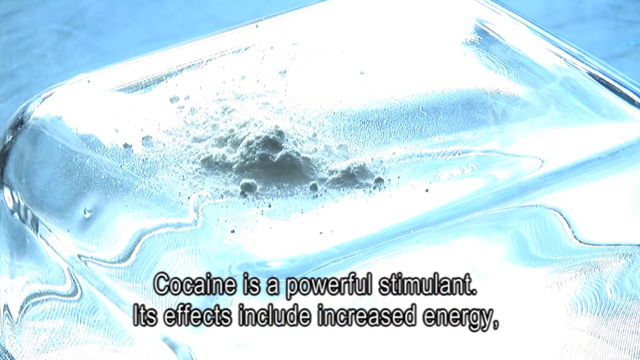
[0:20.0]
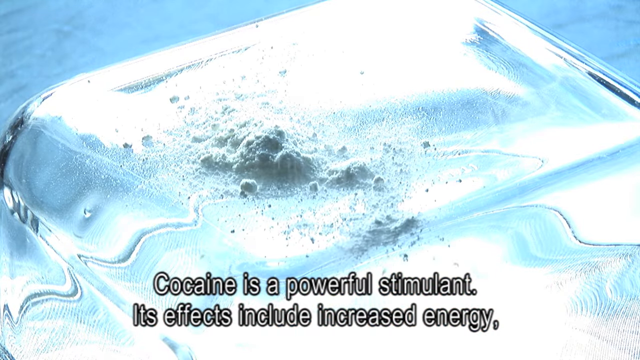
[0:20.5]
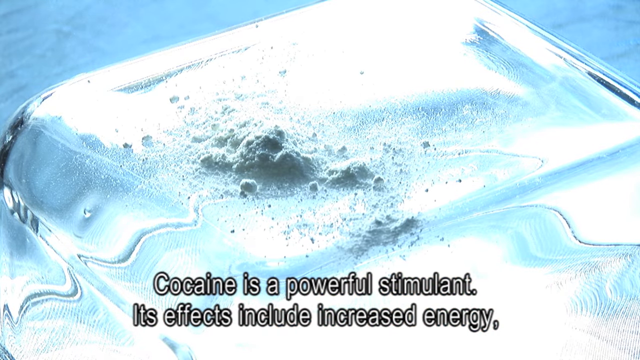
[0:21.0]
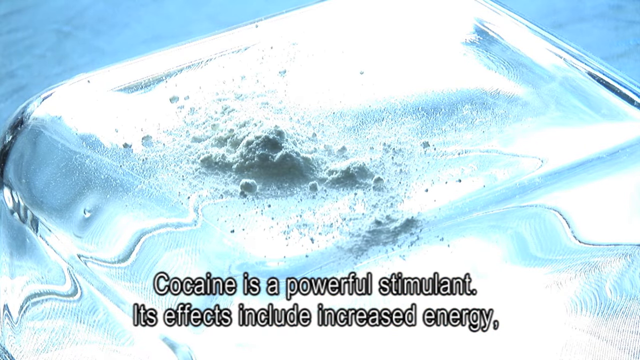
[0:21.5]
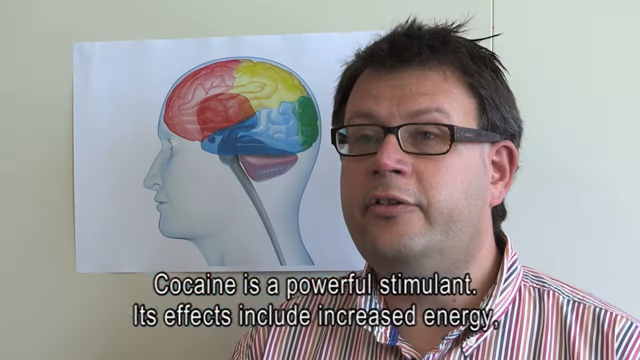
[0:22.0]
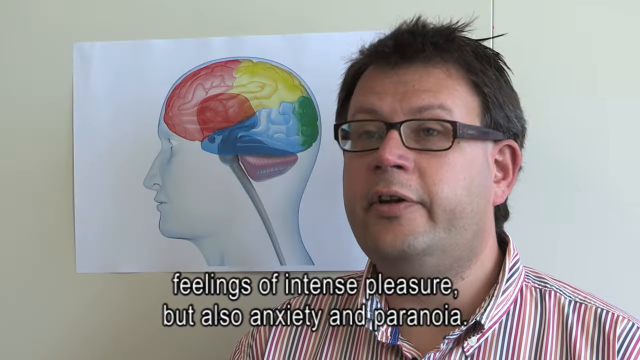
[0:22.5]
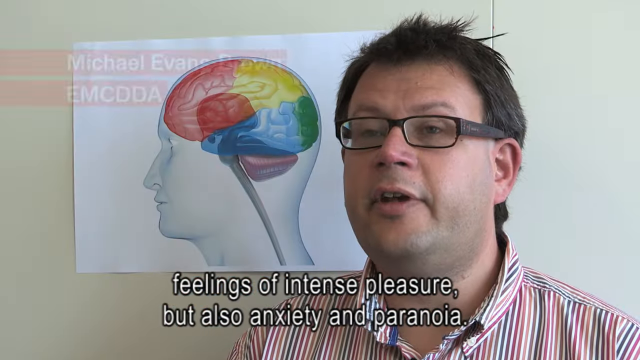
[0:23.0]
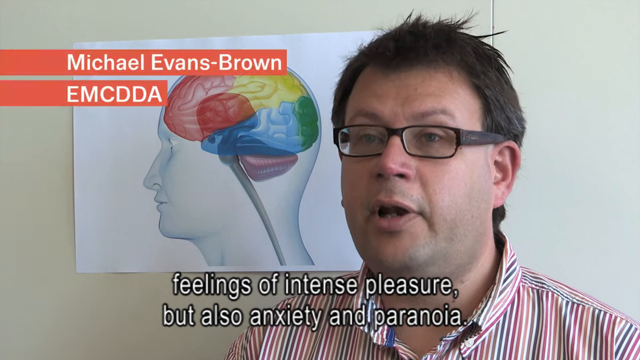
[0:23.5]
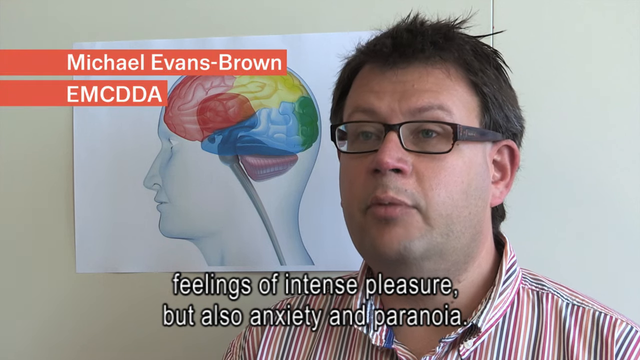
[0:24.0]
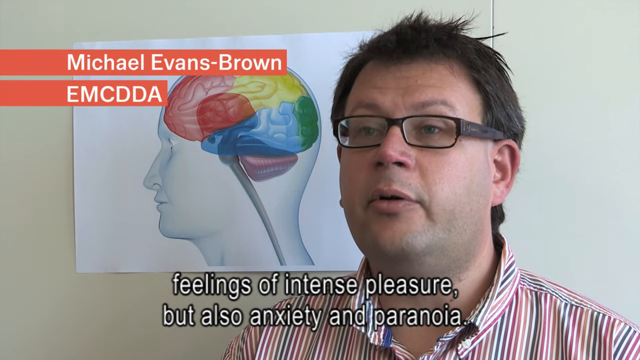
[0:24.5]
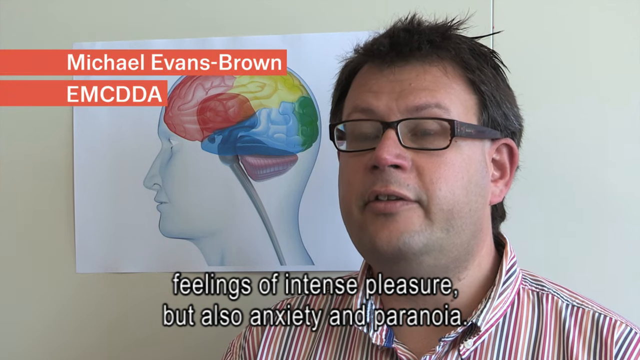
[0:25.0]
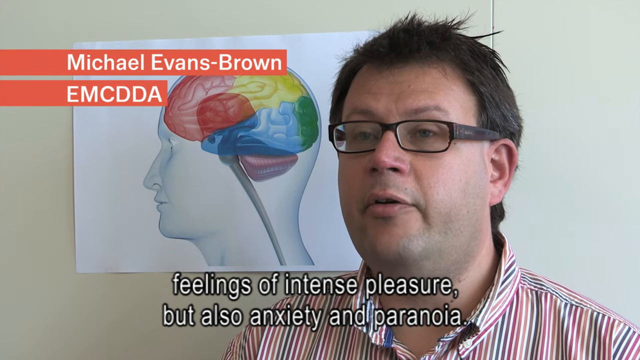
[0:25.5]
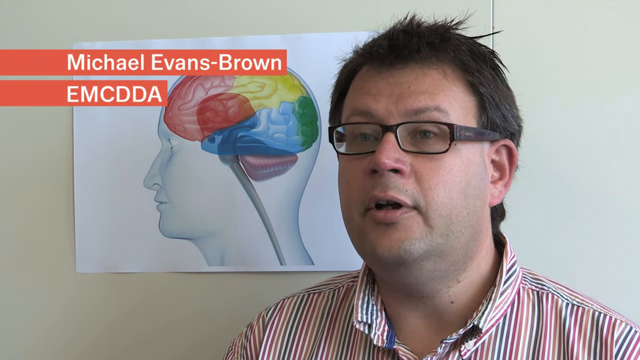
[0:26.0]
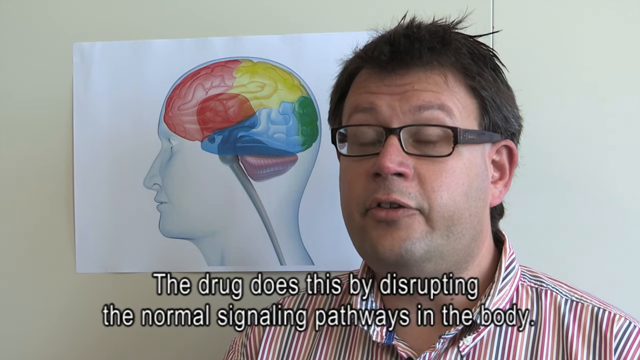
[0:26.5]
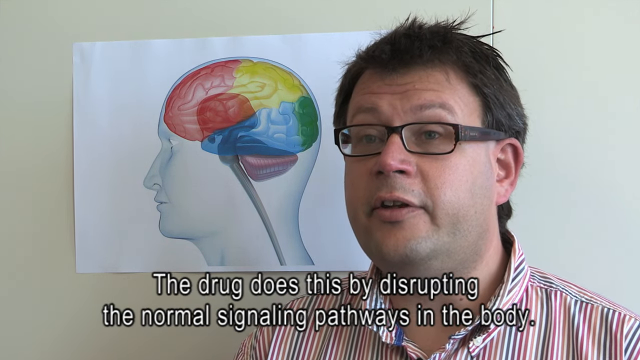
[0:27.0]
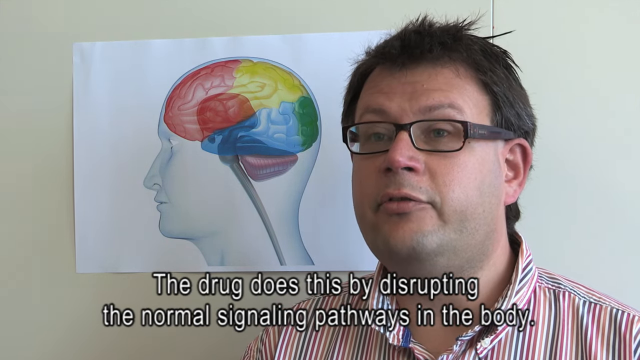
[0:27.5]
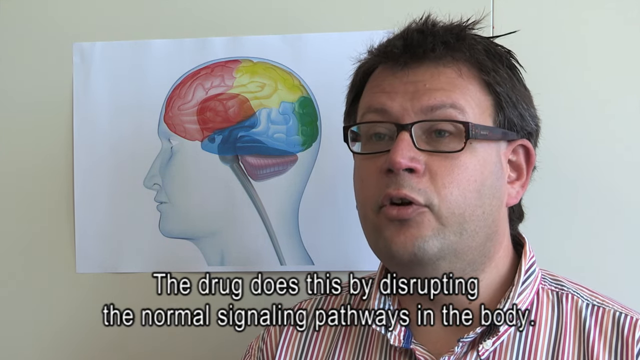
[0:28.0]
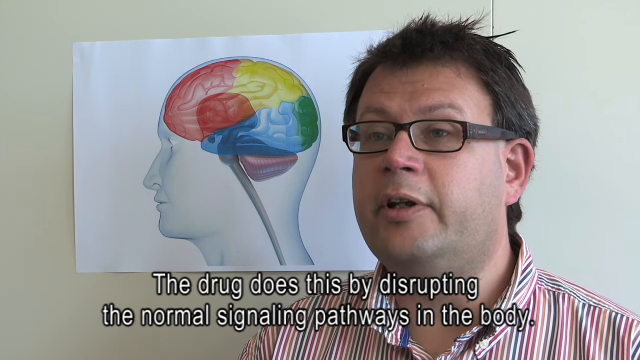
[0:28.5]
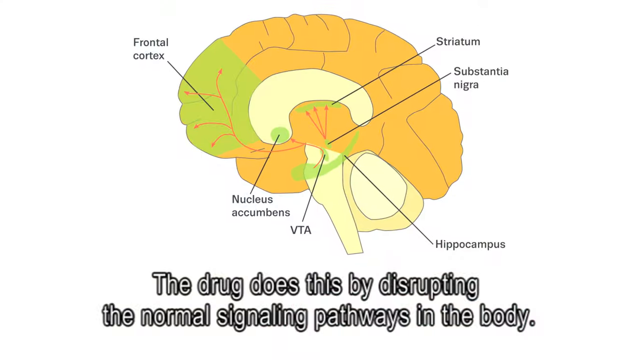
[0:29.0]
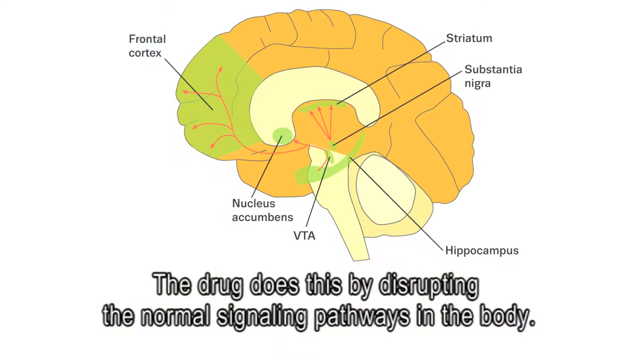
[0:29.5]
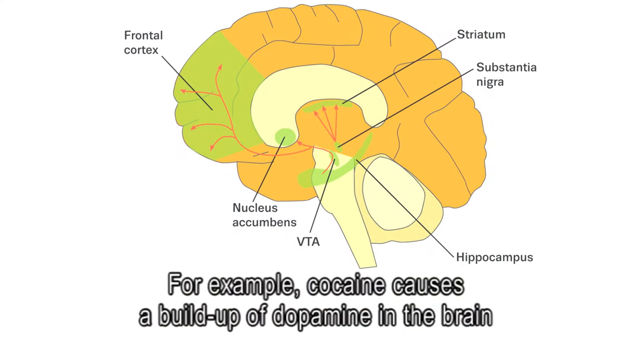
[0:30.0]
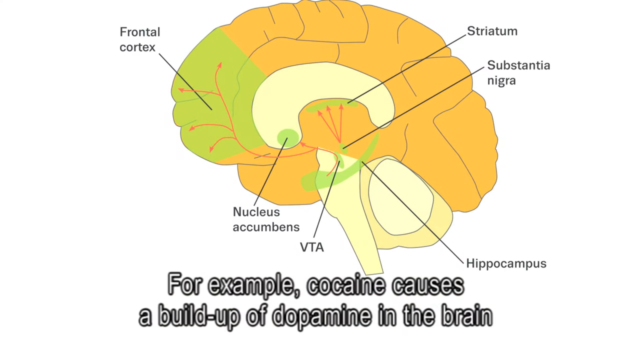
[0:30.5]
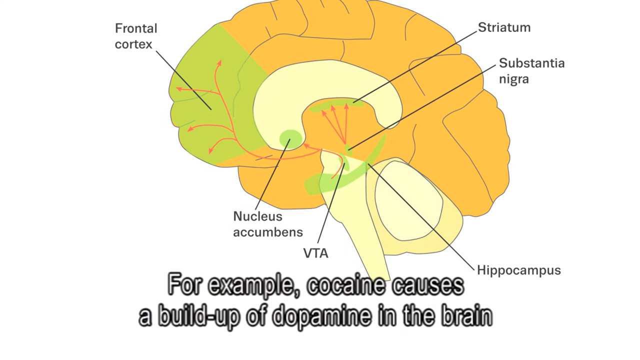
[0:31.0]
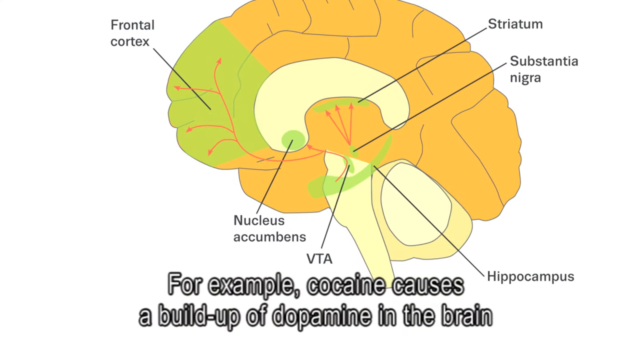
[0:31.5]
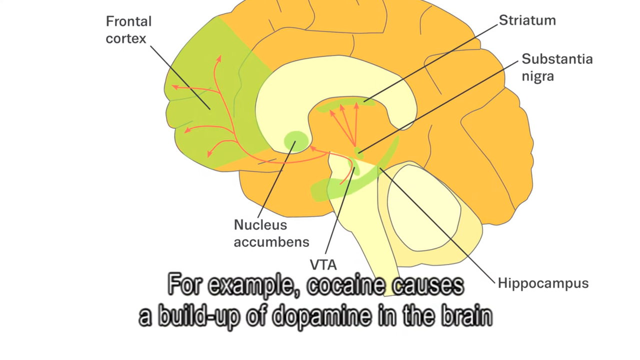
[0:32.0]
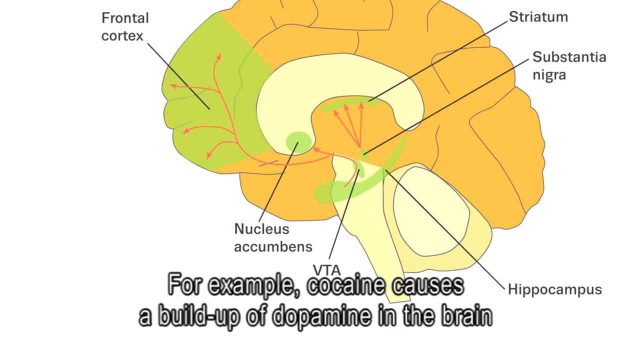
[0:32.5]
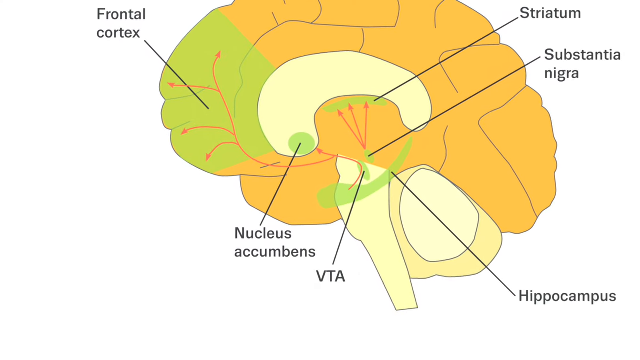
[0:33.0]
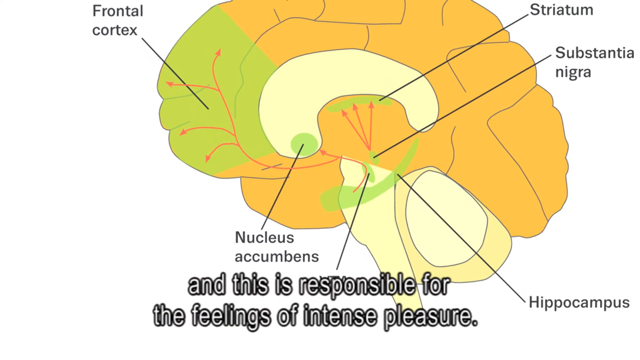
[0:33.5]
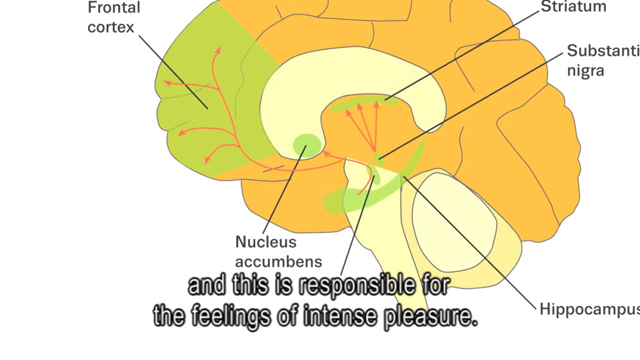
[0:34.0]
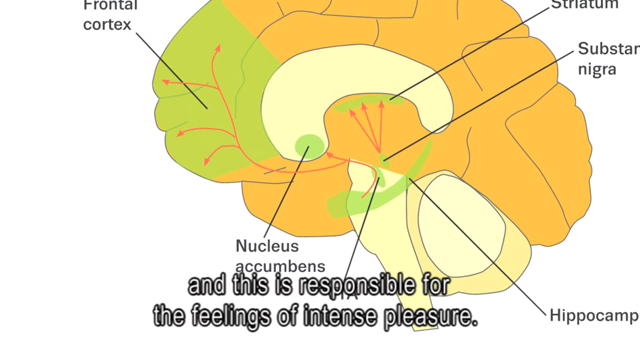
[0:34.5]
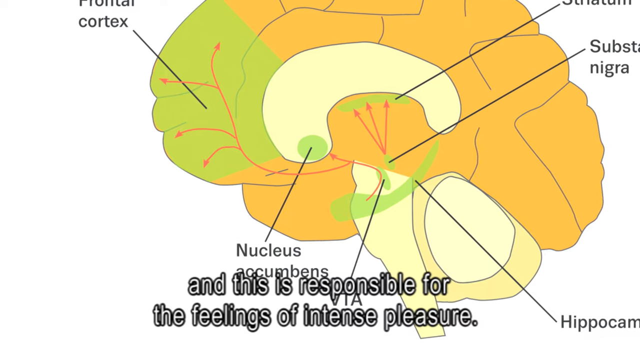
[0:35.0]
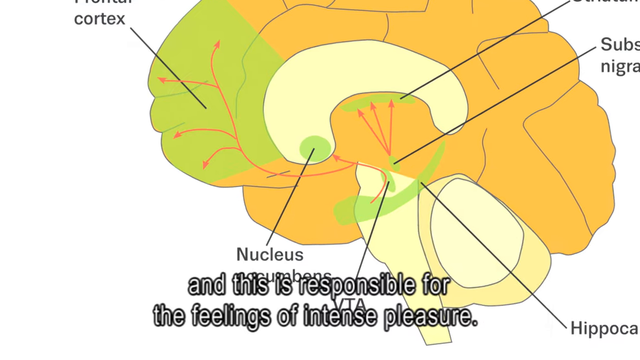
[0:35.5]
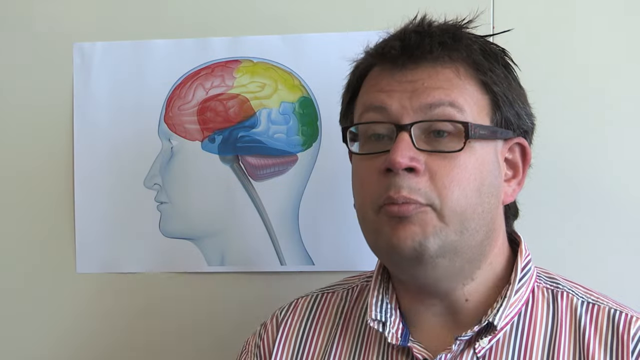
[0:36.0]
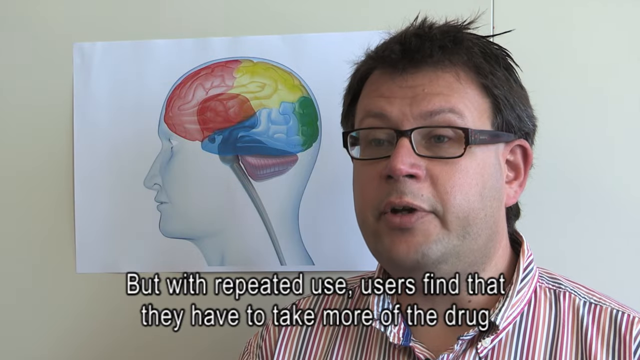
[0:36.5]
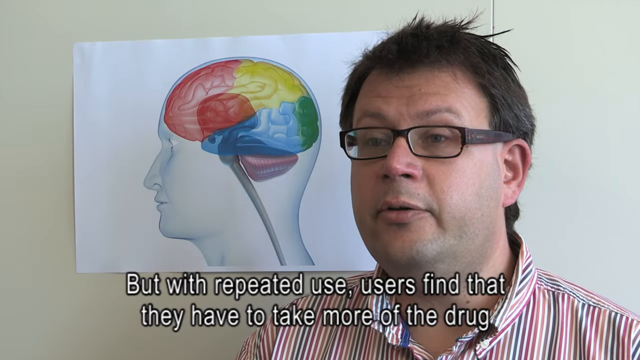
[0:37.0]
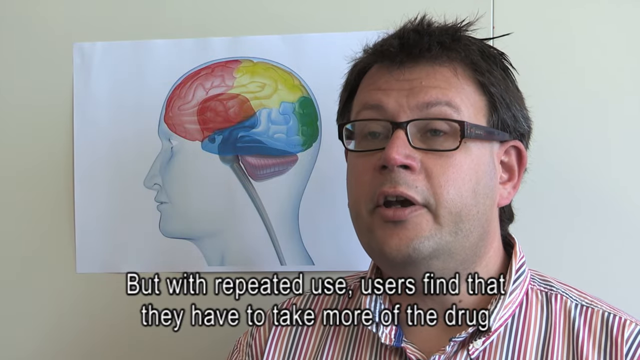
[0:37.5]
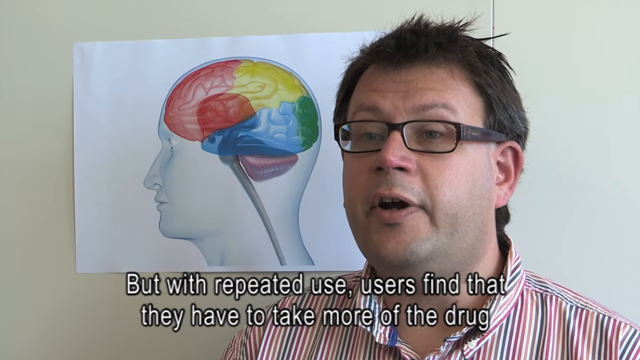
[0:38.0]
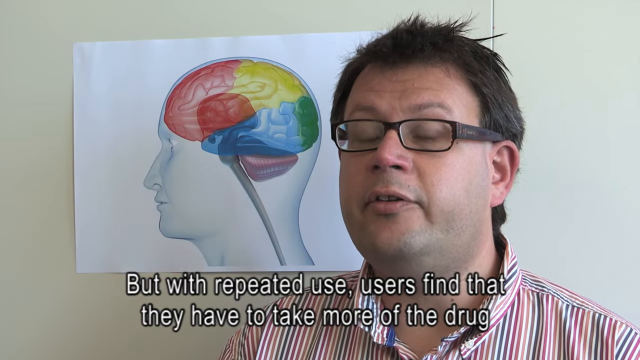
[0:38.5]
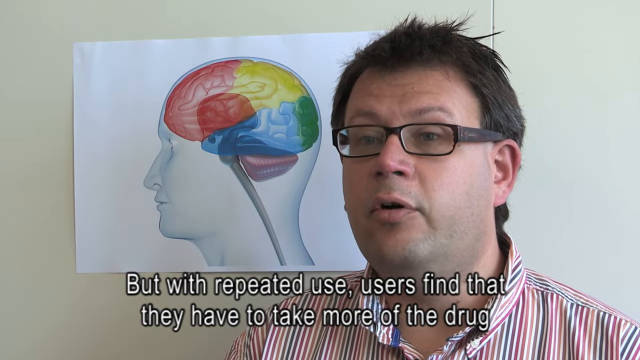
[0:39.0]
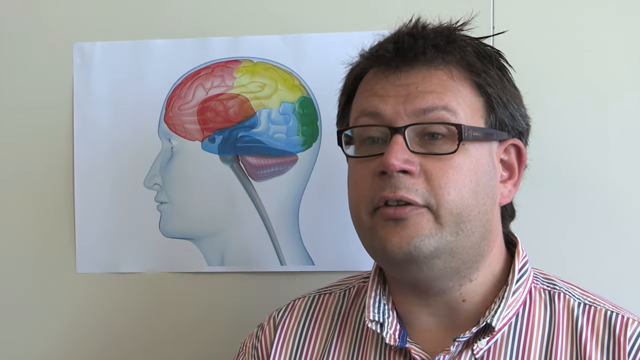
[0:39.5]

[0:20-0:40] Words appear on the screen, apparently about the brain: frontal cortex, striatum, nucleus. A man with glasses and spiky hair, probably in his 40s and maybe a scientist or doctor, is talking. A white powdery substance, apparently cocaine, is in a little pile, seemingly on top of a little glass dish. A man who looks like a scientist or doctor, an older gentleman in a kind of geeky shirt, shows a couple of different pictures of a brain with a couple of different colors.